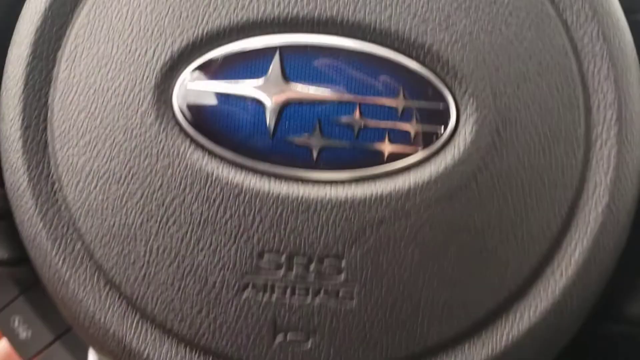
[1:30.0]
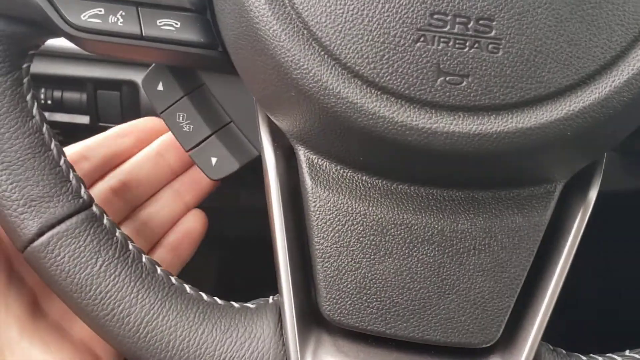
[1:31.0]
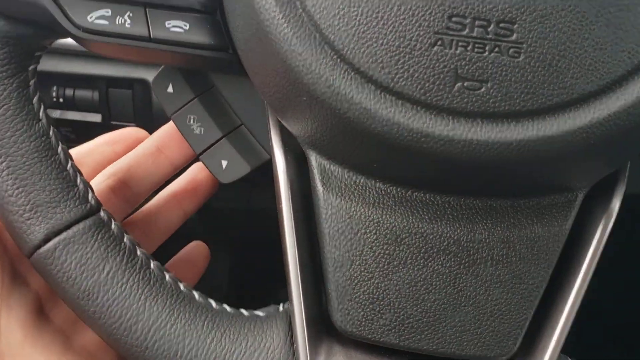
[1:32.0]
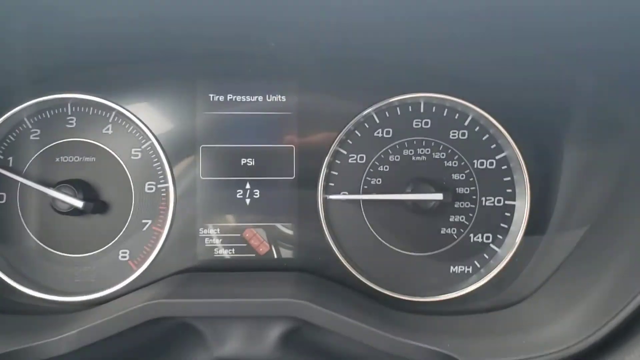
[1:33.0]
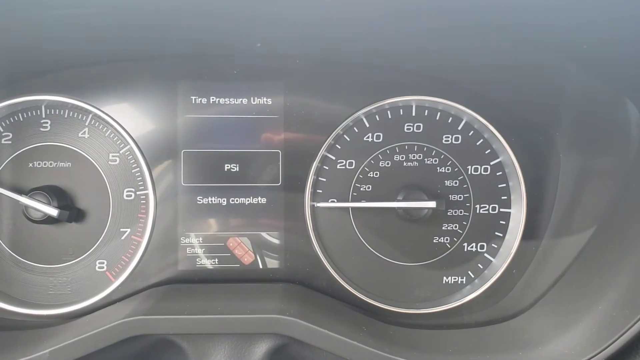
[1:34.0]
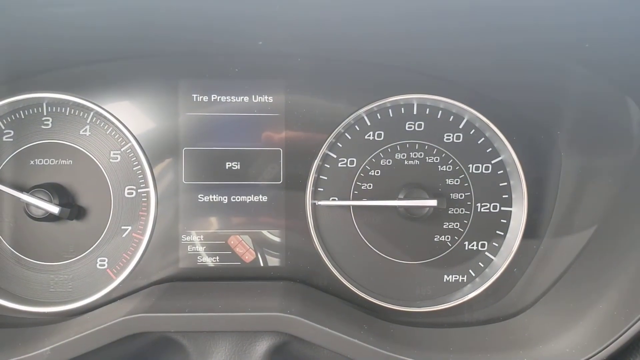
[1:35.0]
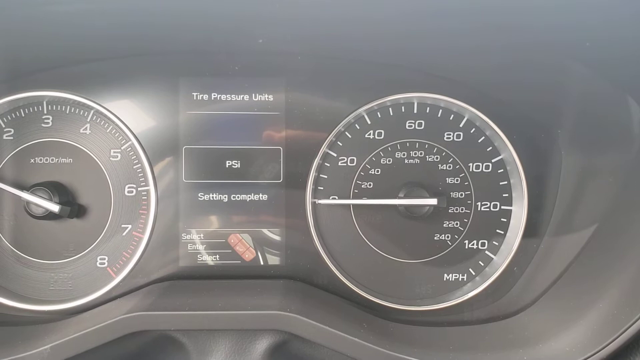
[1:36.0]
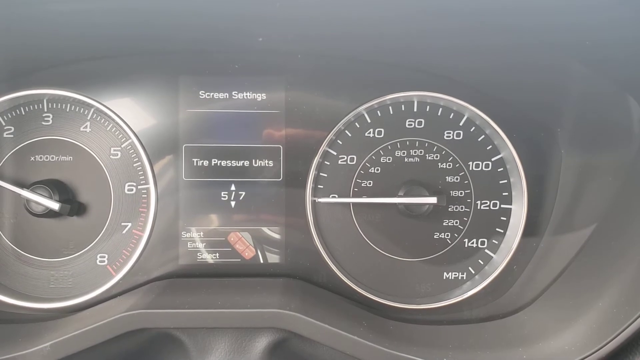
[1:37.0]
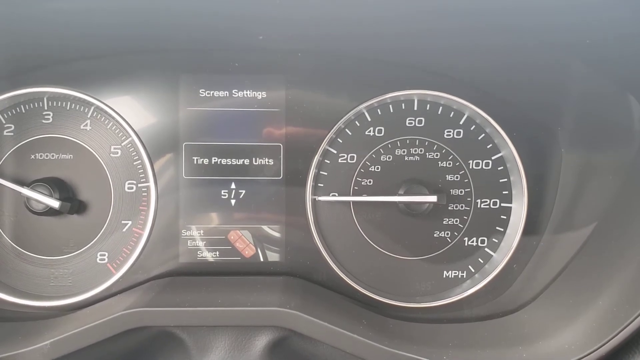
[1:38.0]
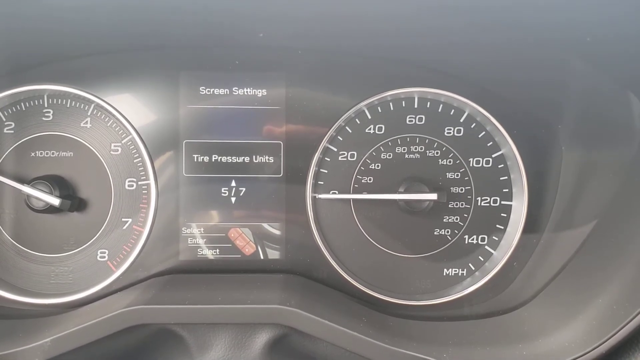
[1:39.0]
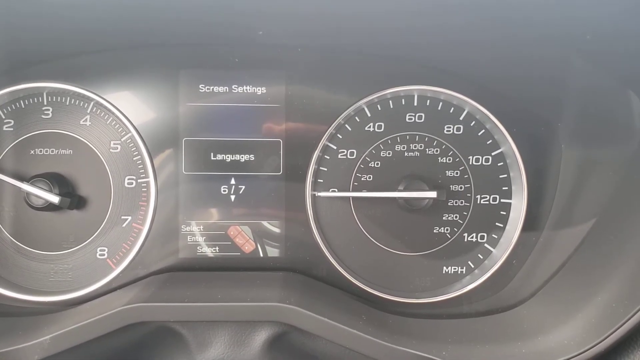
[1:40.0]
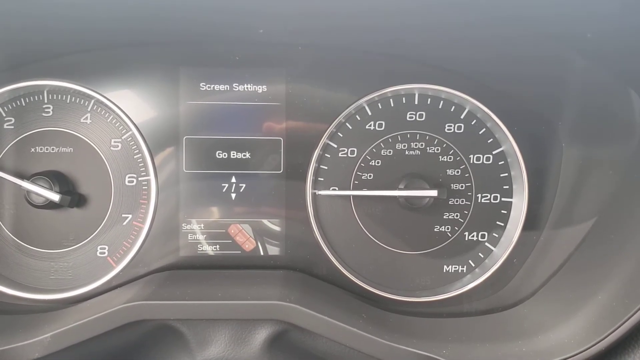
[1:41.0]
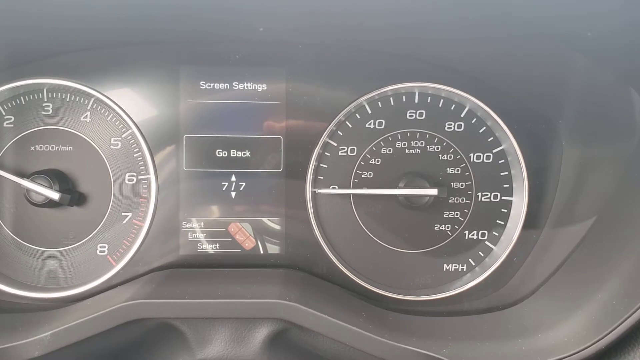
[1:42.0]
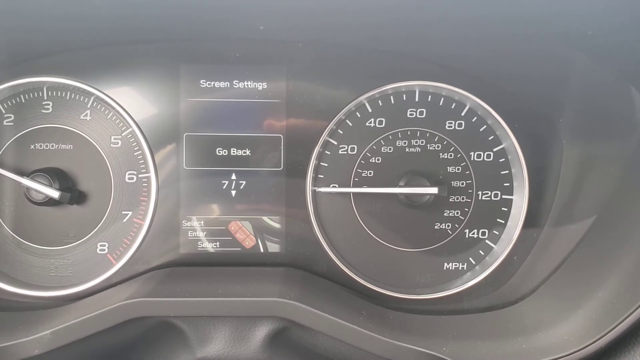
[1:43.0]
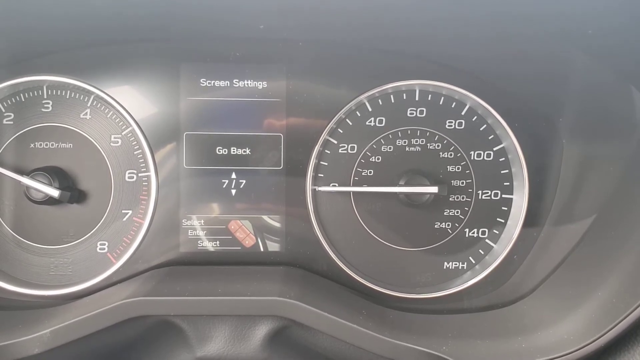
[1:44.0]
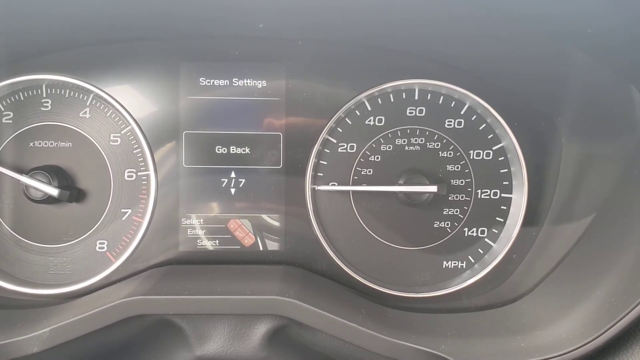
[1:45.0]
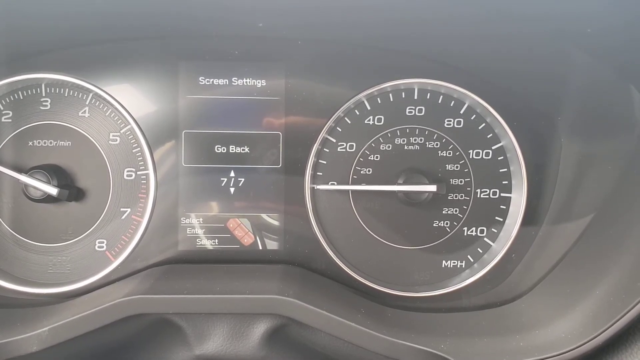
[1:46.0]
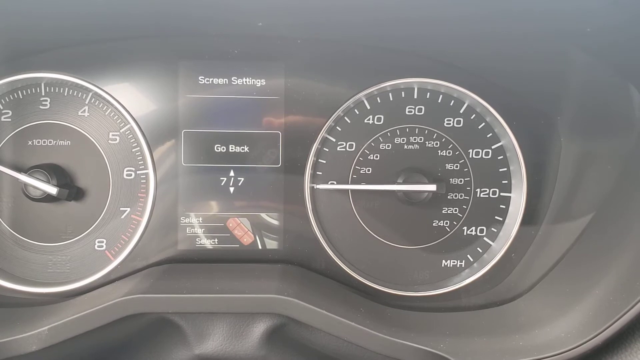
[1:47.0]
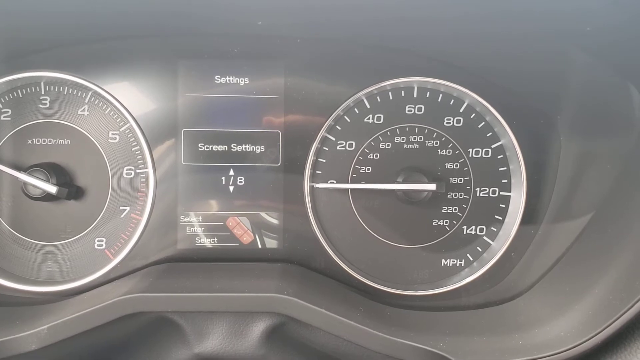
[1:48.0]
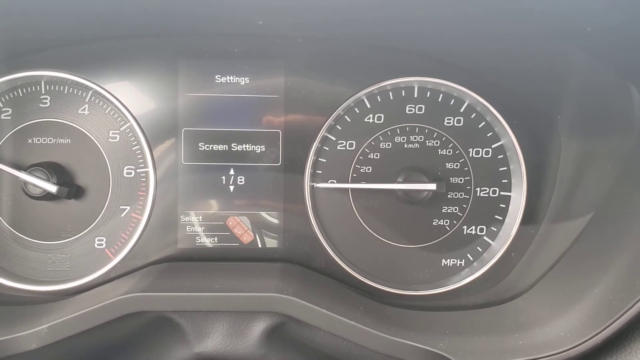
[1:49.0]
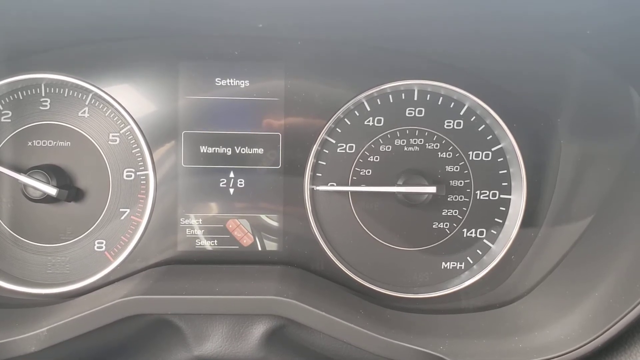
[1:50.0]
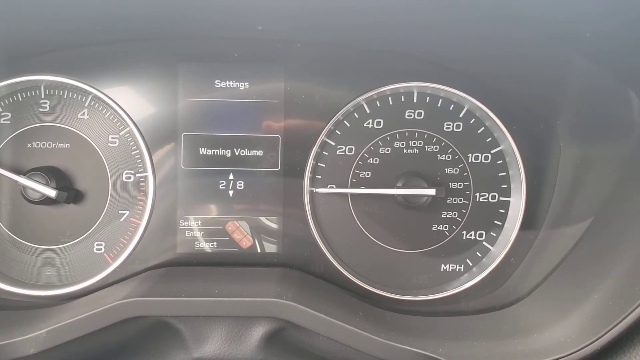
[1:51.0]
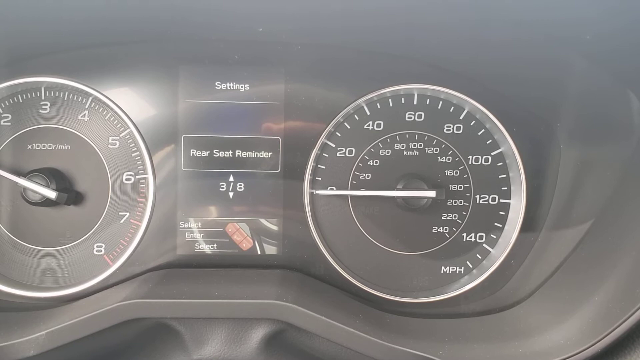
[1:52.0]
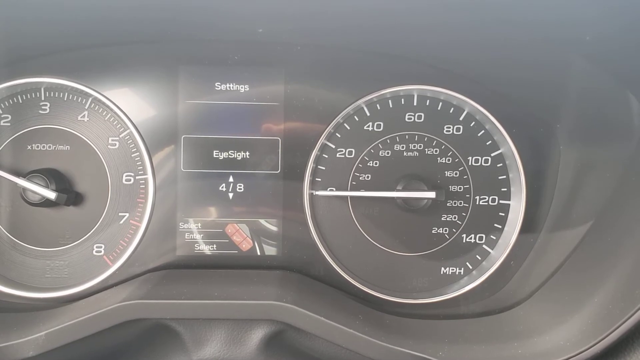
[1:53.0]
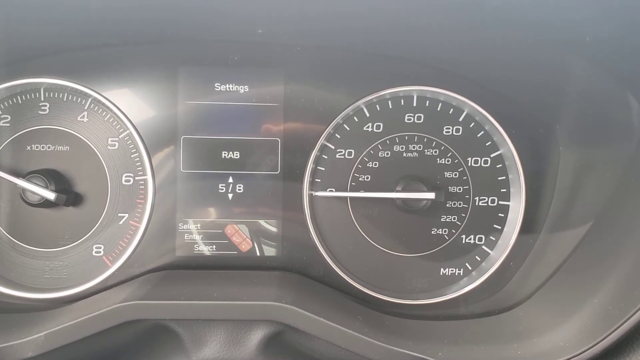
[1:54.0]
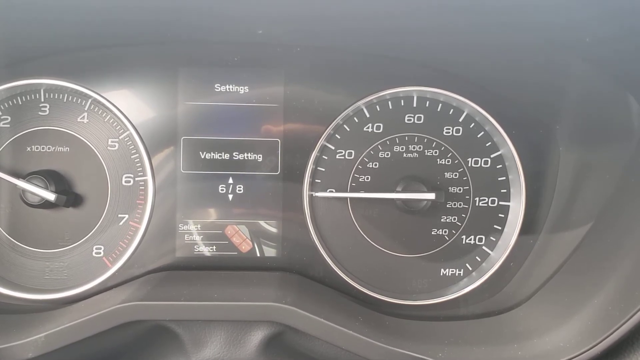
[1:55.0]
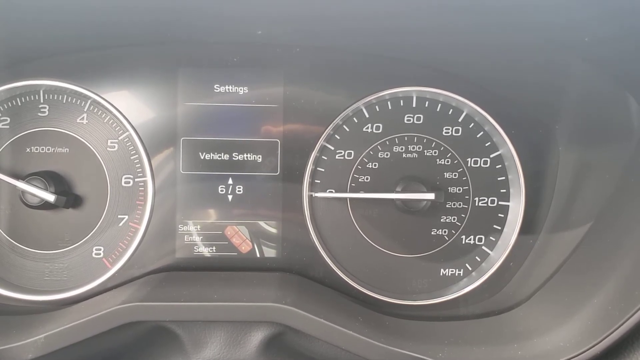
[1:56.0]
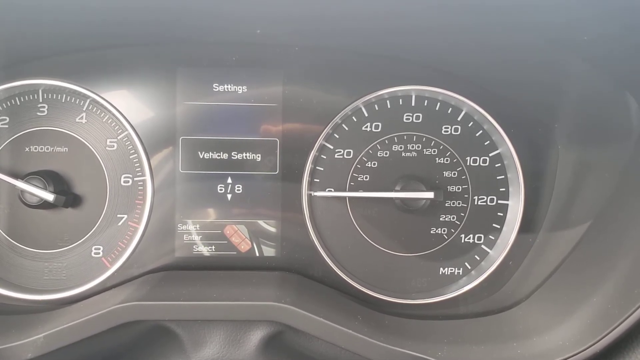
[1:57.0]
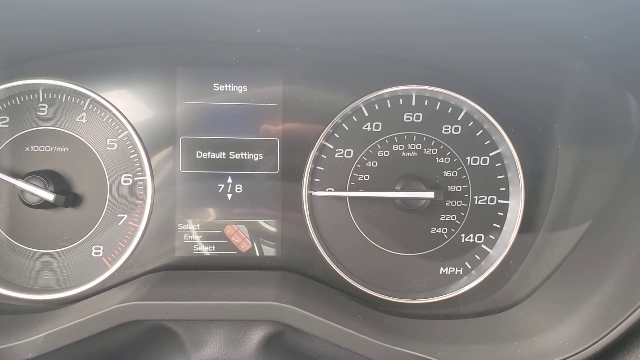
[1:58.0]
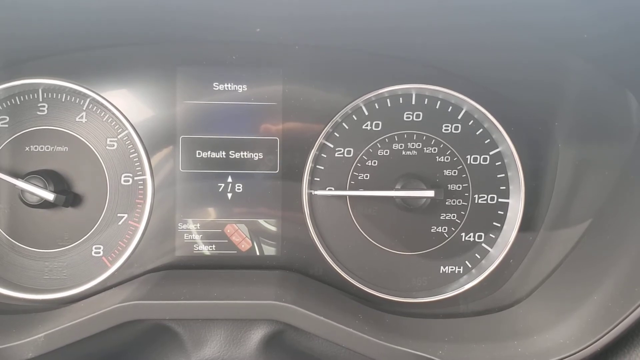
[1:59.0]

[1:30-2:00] The horn area of the steering wheel is shown. The brand looks like Subaru, with a big star on the left and five stars on the right working their way down, on a blue background. Underneath, in an oval shape, it says "SRS airbag". The person has four fingers touching the tab on the lower left-hand side that changes the digital screen between the meters. The person touches it, and the screen says "tire pressure units", "PSI", then "safety complete", and then "languages", "go back".